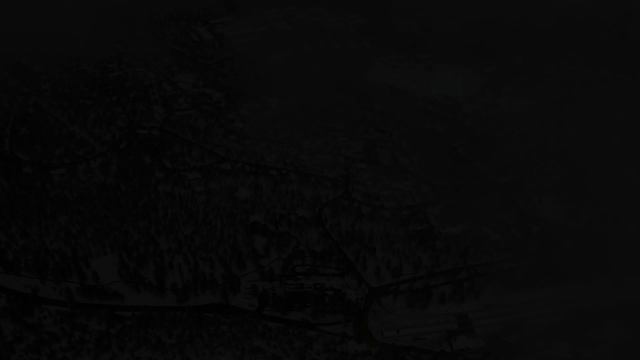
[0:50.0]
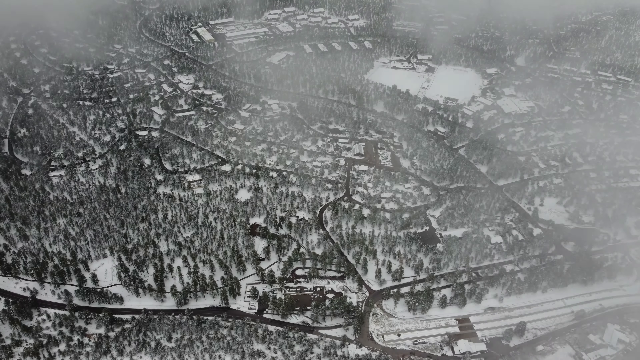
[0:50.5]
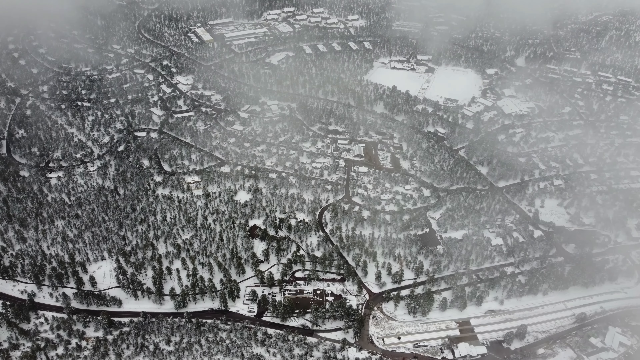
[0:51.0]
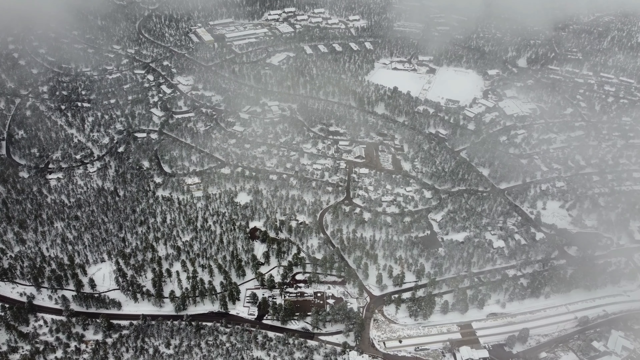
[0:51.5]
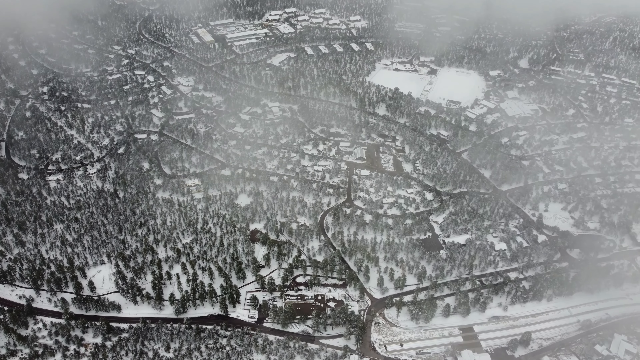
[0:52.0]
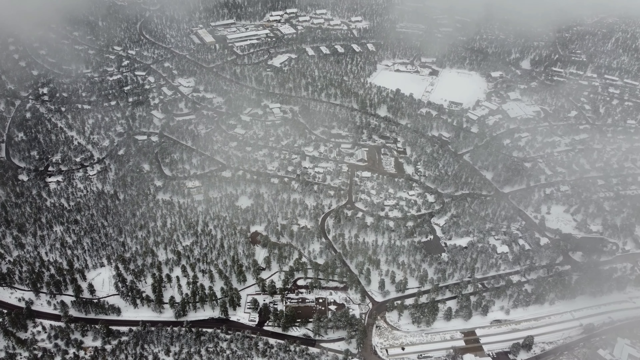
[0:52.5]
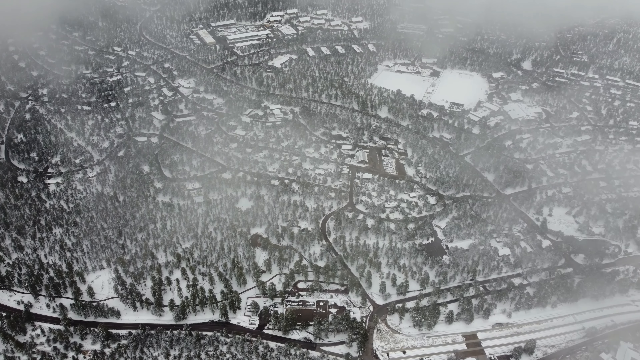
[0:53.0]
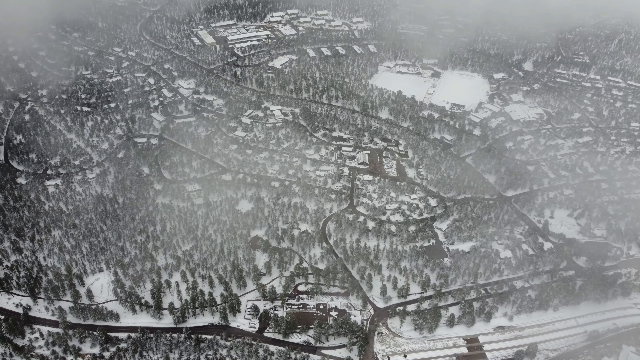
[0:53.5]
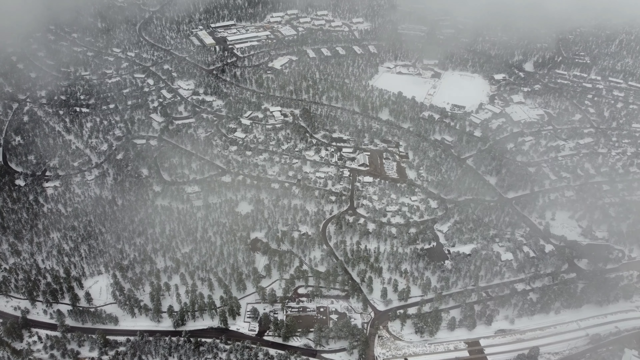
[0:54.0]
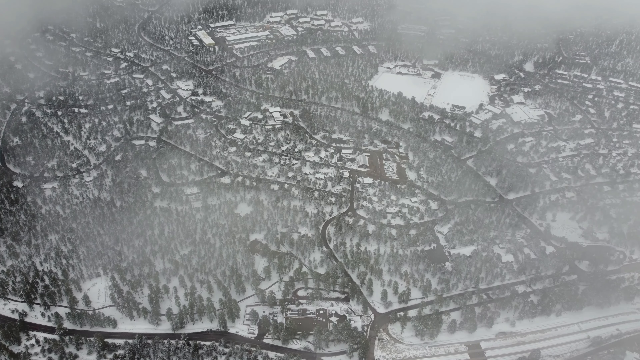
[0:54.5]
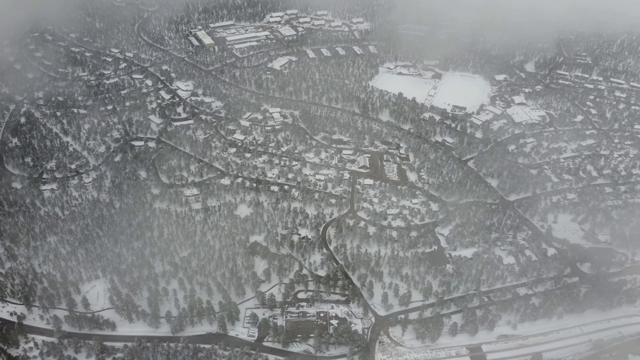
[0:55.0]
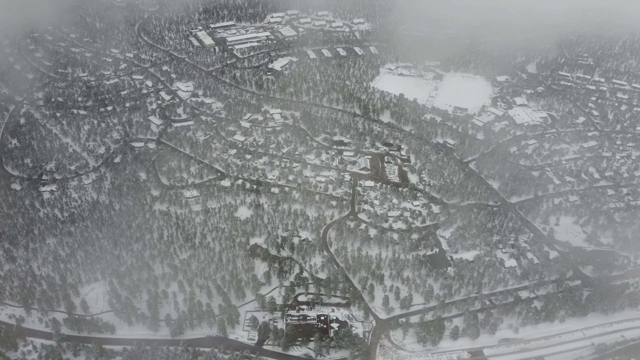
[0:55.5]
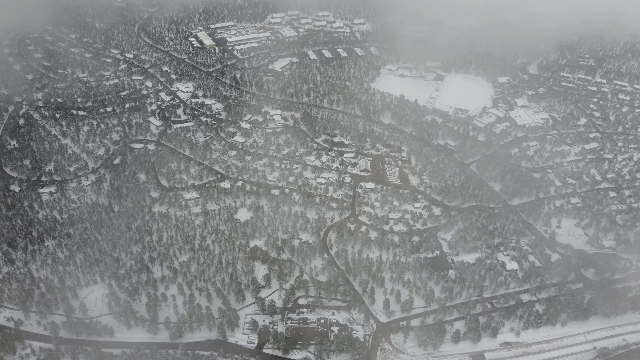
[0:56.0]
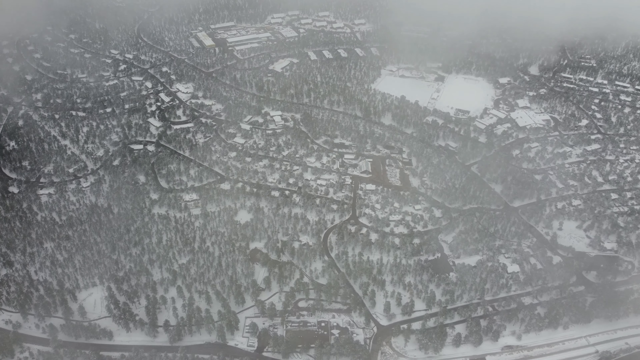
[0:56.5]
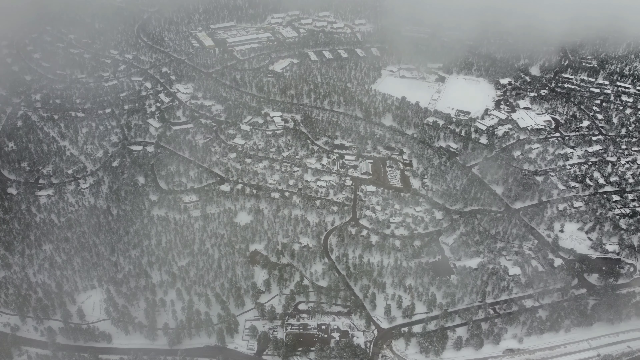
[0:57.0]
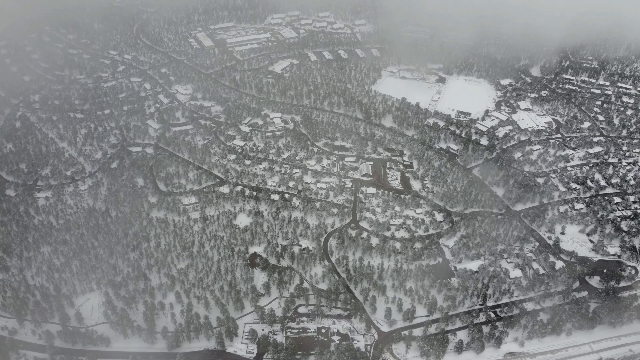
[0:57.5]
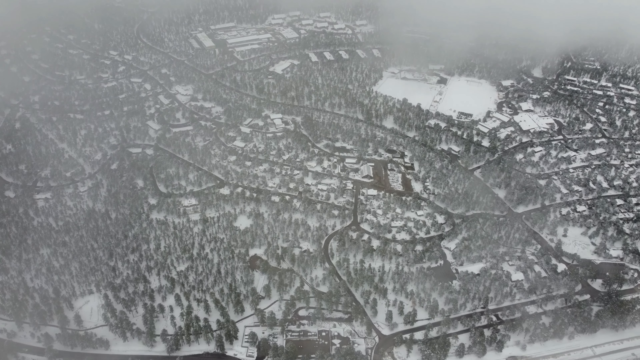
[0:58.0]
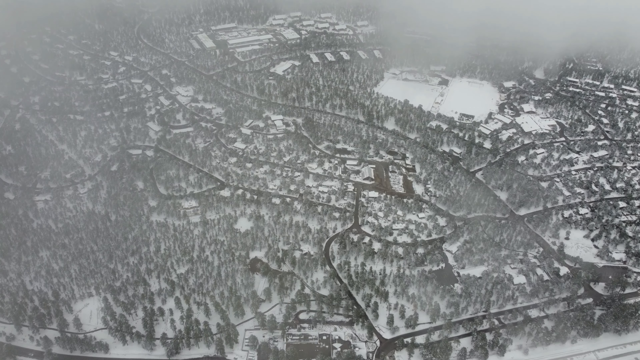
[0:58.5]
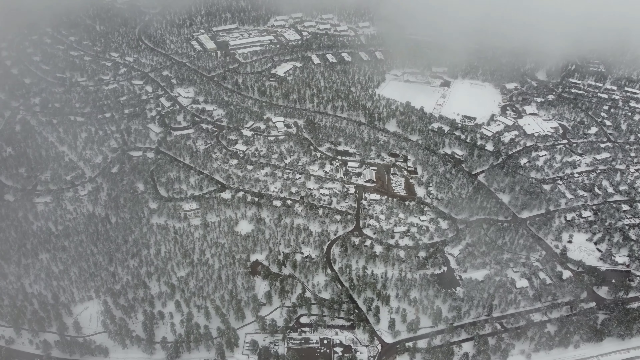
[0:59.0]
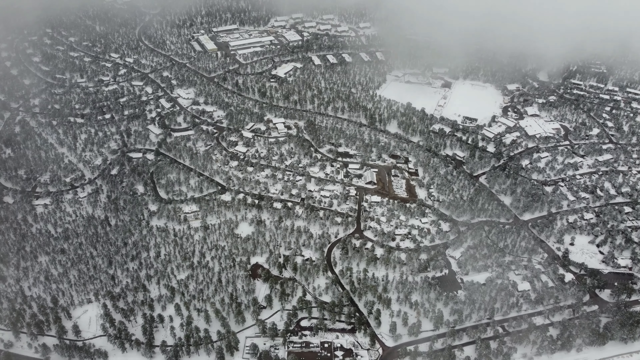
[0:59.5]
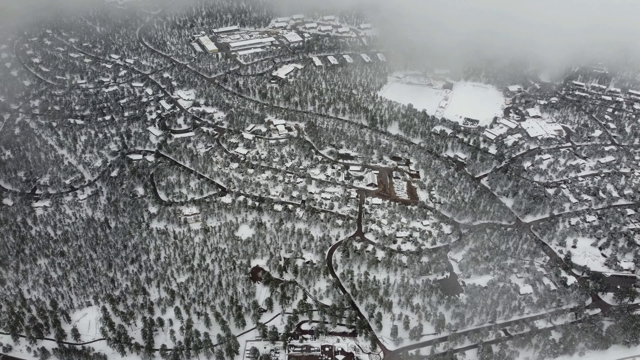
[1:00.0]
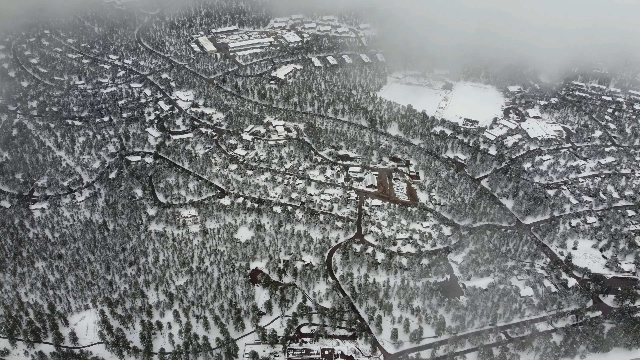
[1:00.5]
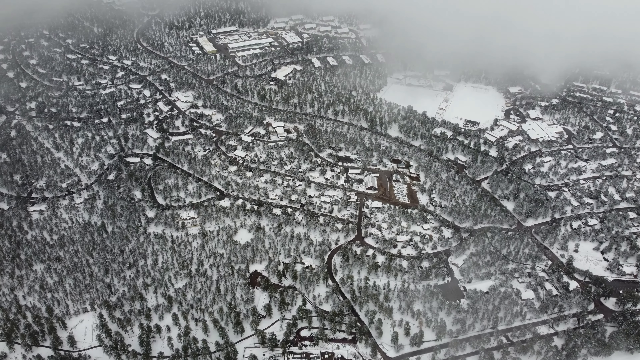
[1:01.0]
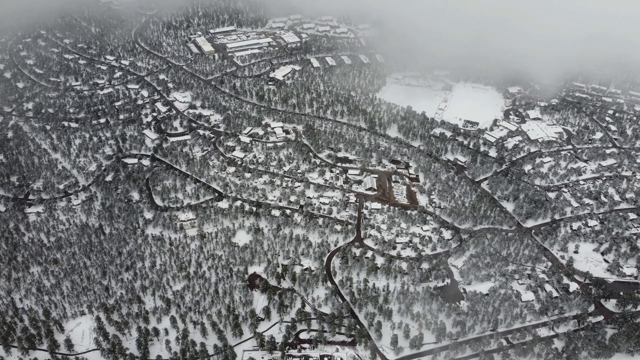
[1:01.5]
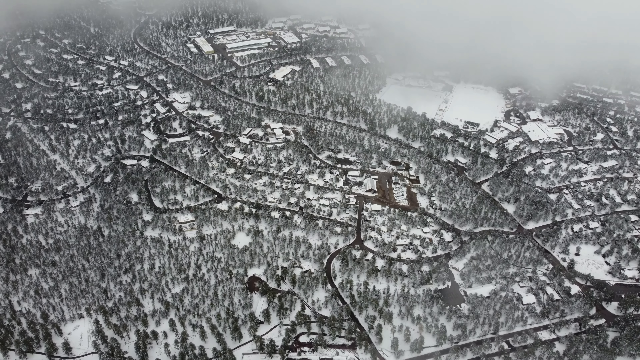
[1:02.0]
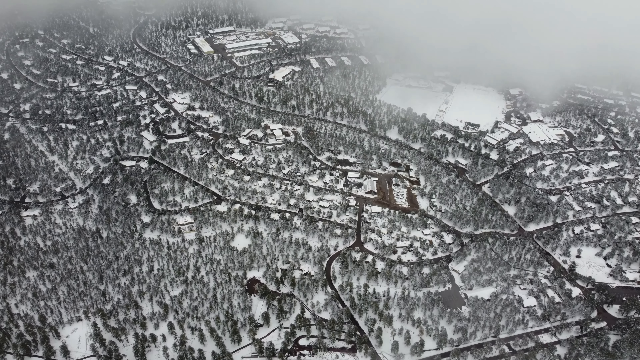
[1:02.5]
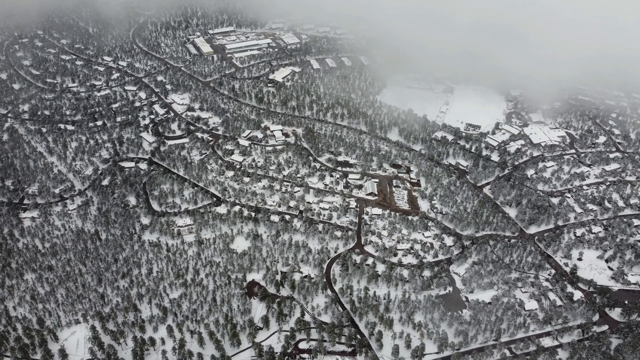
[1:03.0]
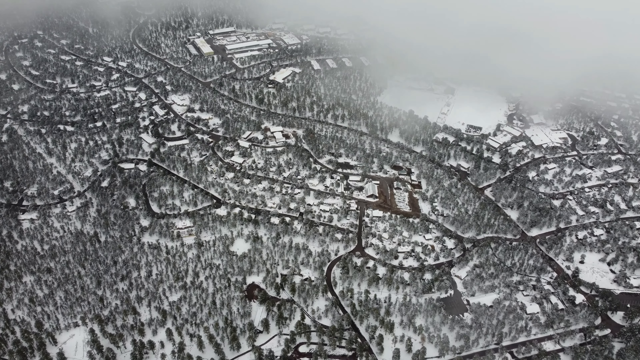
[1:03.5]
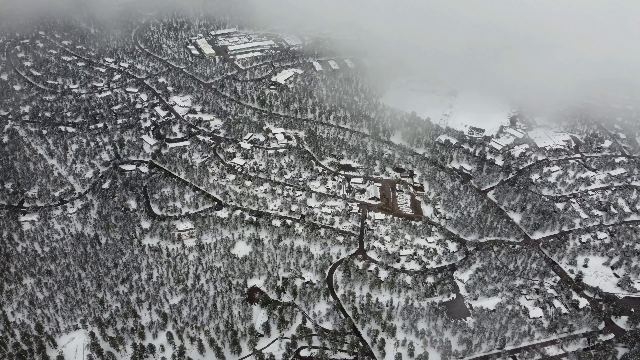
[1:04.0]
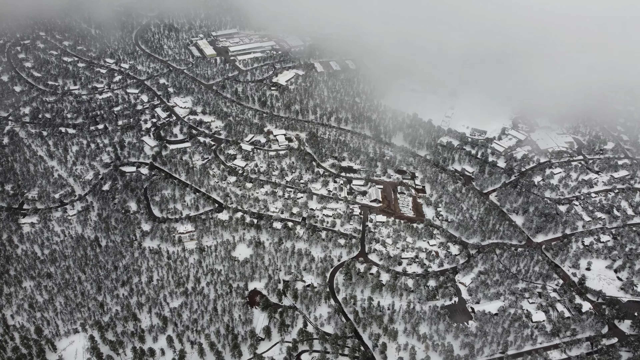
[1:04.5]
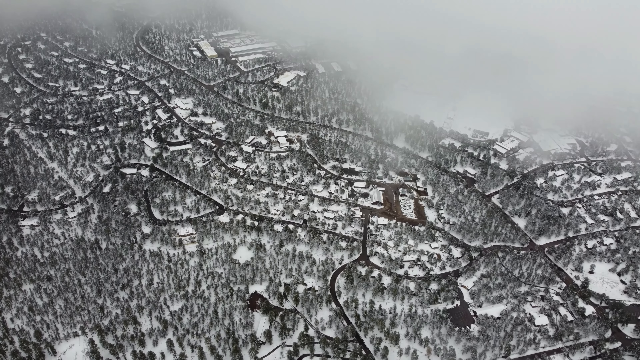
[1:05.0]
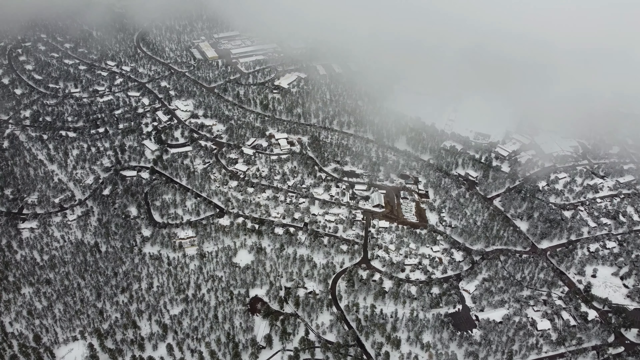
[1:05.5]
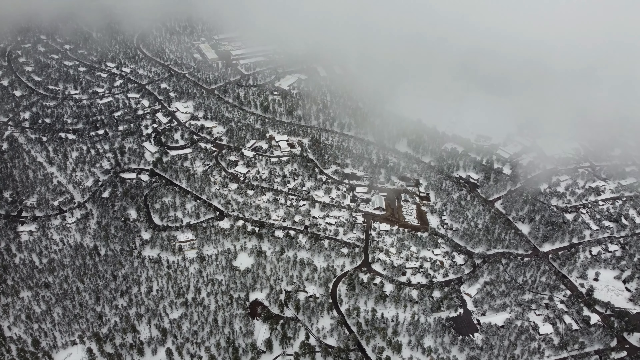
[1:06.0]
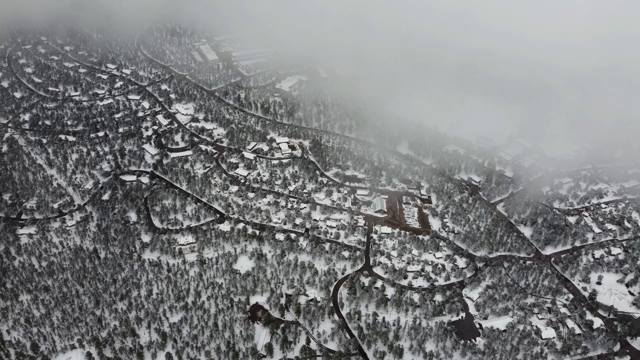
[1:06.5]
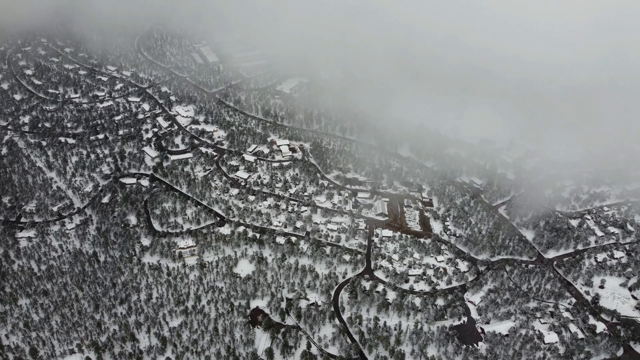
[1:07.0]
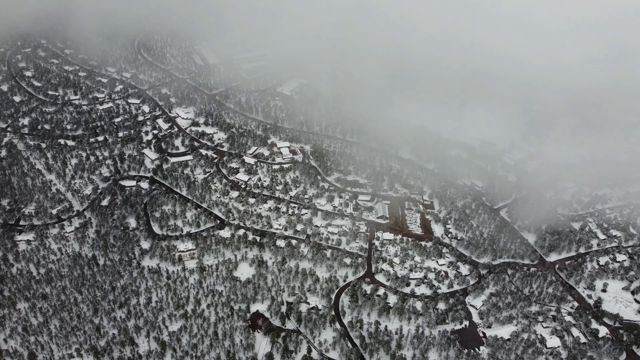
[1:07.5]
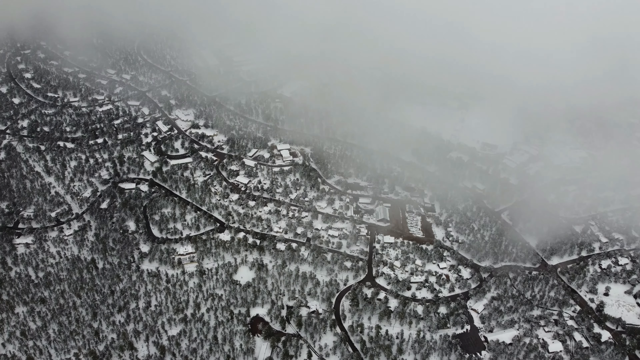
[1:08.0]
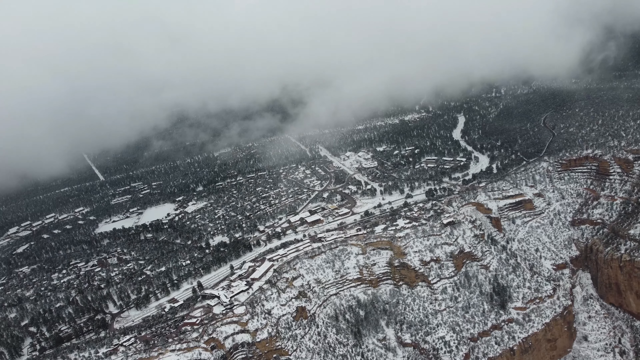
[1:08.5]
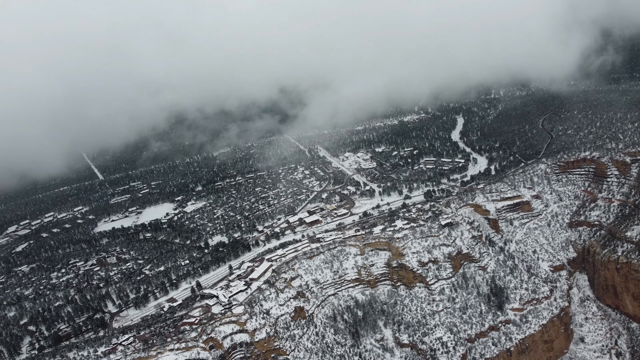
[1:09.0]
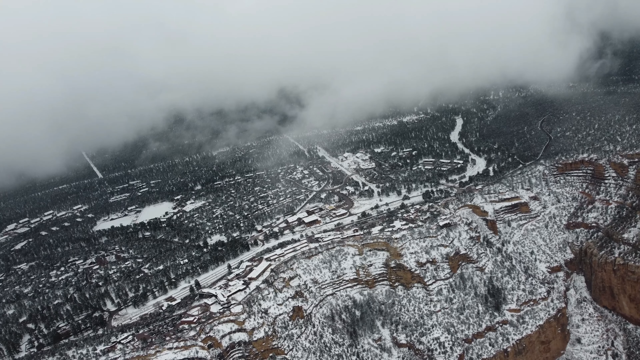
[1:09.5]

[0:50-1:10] What looks like a cartoon illustration appears on screen, and then the screen turns completely black. It fades into top-view footage of what looks like multiple trees or buildings, with clouds moving to the left of the screen and the ground partly visible through them. The camera continues moving above, over lines of roads or a river and the tops of buildings, moving forward until the shot is covered by a large cloud of fog. Another shot shows an area with a big cloud at the top of the scenery and what looks like a mountain at the bottom of the screen. The upper part of the area looks like it has multiple trees and is slightly above ground, where there is white snow.